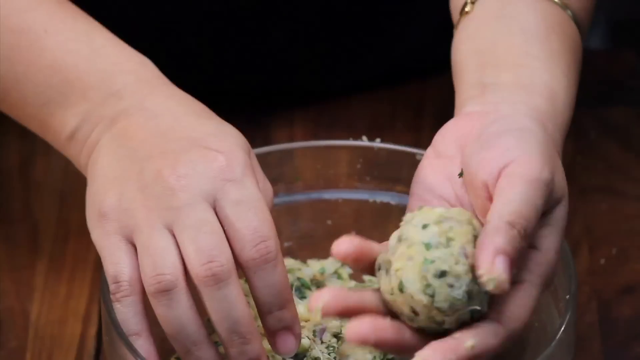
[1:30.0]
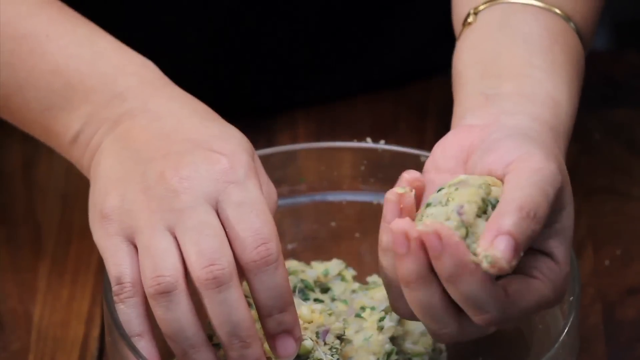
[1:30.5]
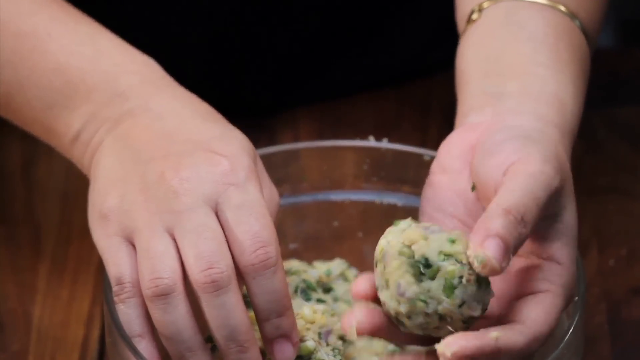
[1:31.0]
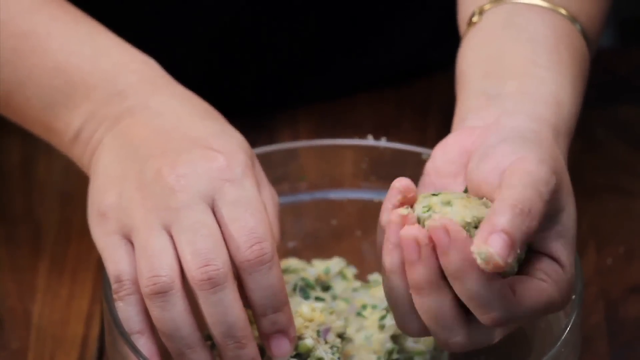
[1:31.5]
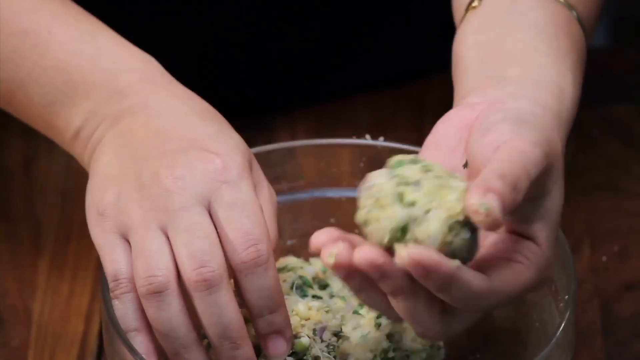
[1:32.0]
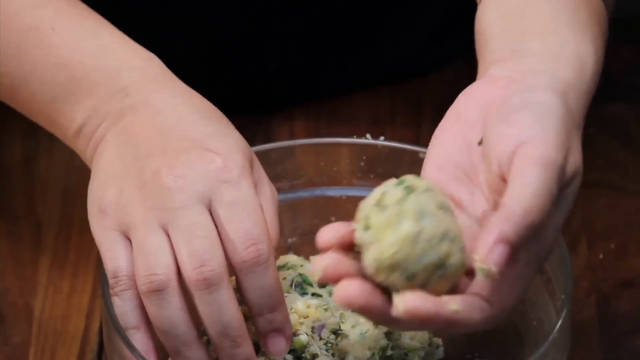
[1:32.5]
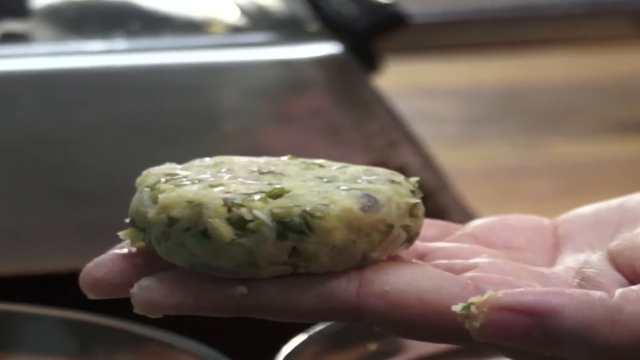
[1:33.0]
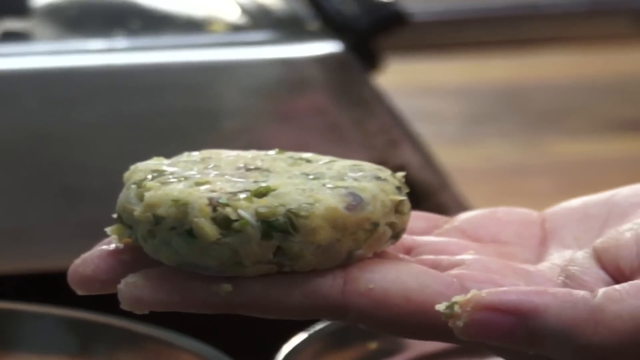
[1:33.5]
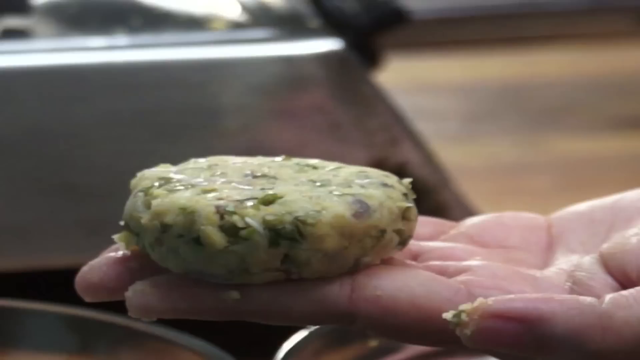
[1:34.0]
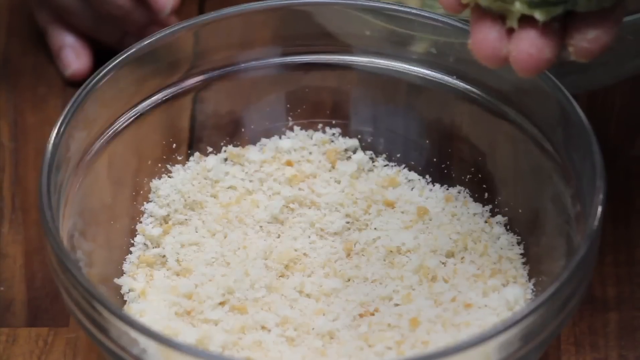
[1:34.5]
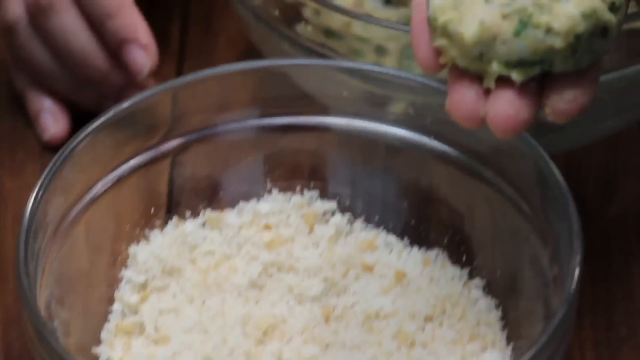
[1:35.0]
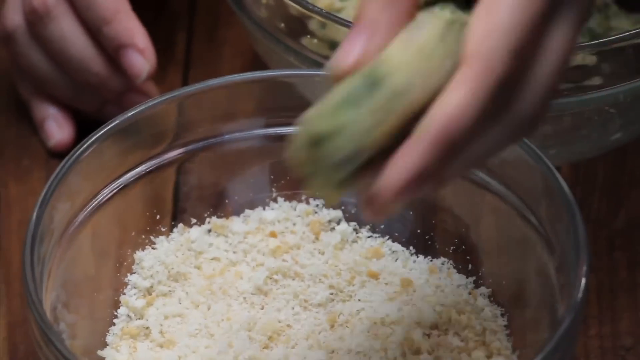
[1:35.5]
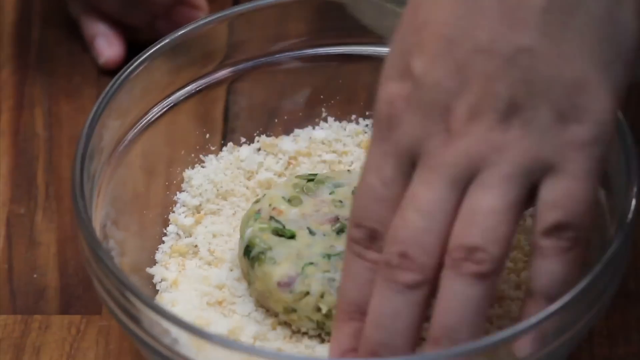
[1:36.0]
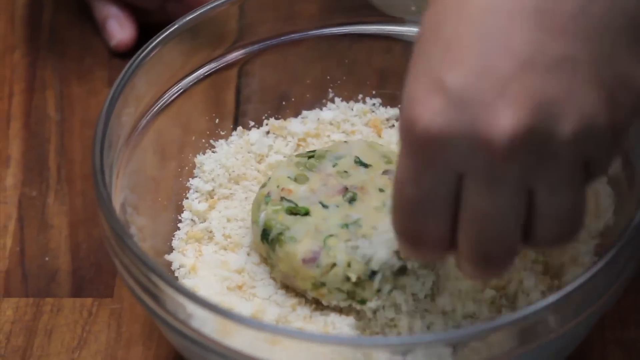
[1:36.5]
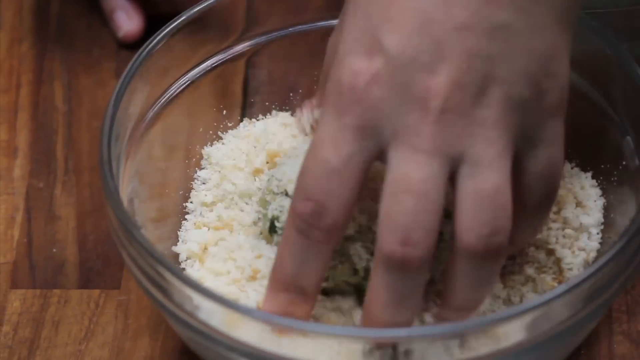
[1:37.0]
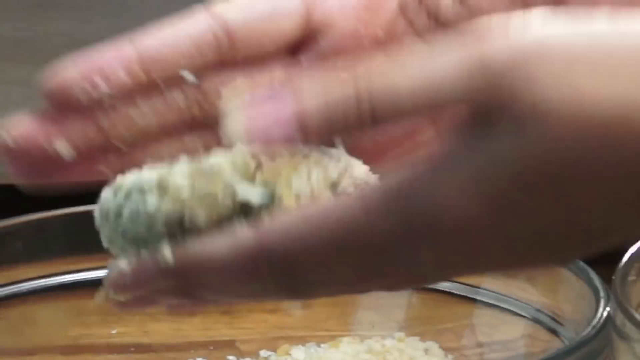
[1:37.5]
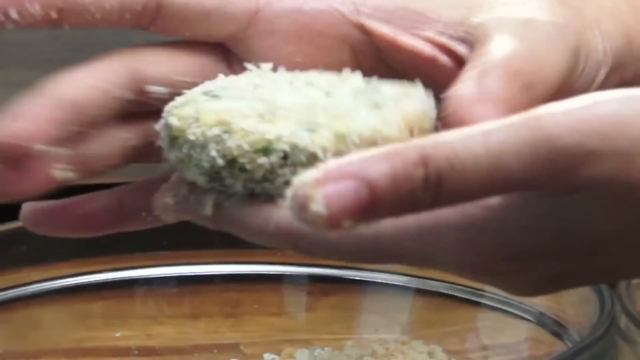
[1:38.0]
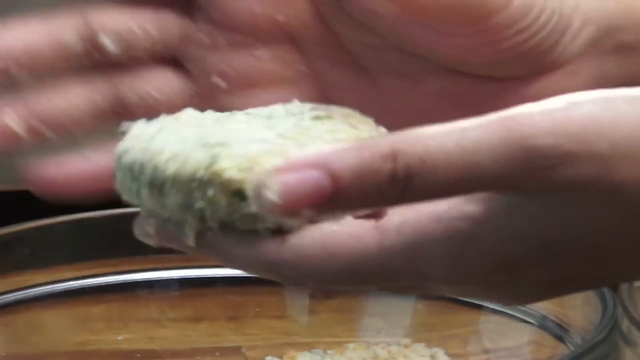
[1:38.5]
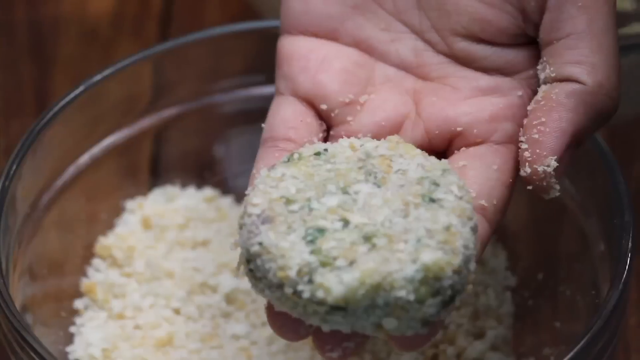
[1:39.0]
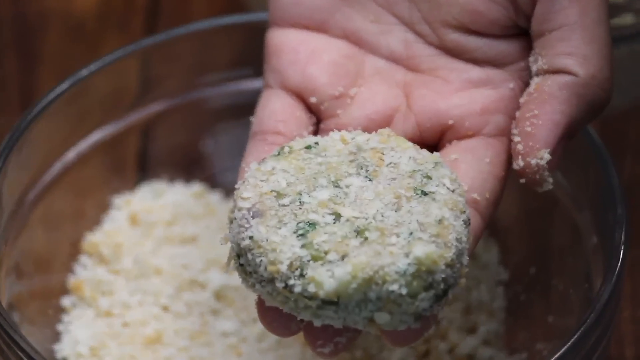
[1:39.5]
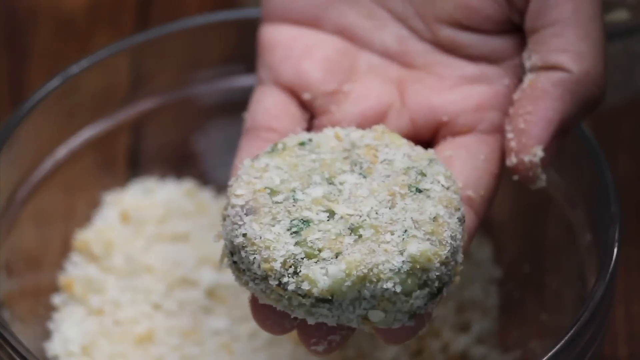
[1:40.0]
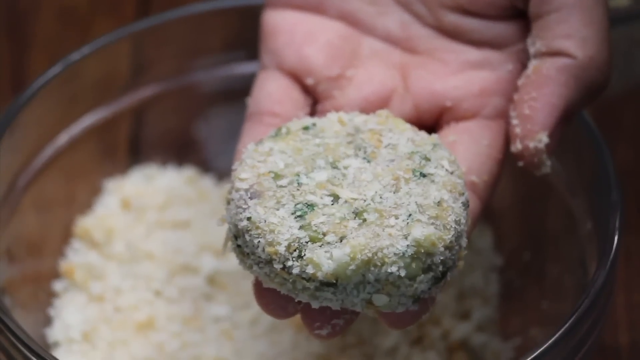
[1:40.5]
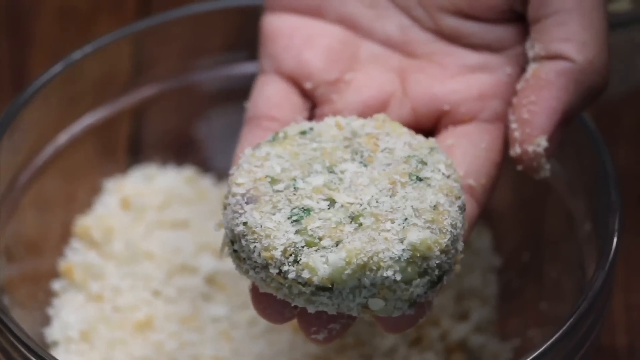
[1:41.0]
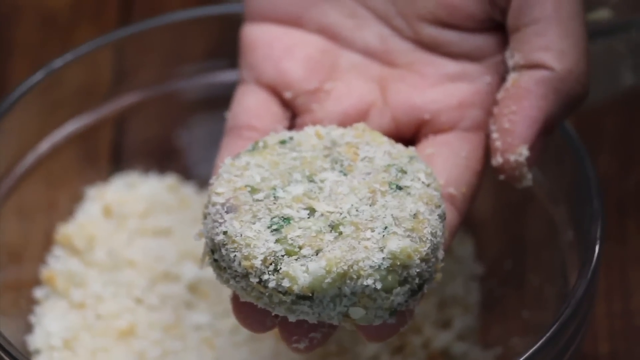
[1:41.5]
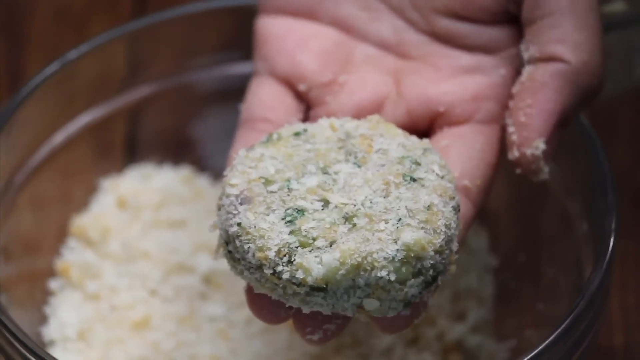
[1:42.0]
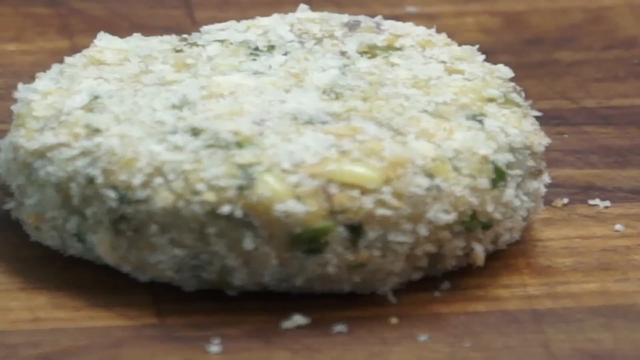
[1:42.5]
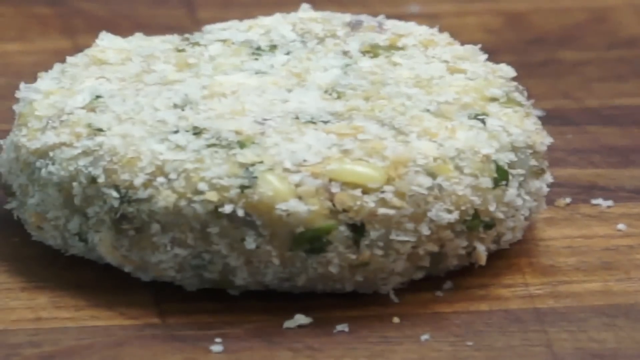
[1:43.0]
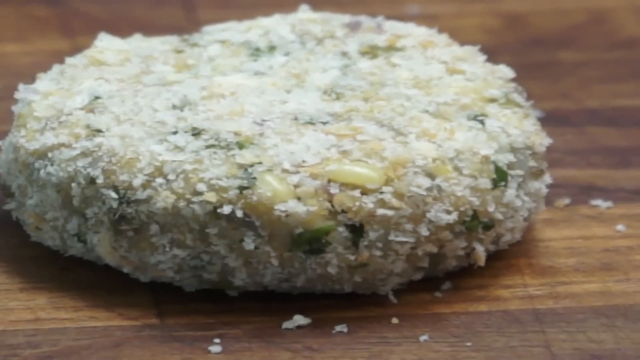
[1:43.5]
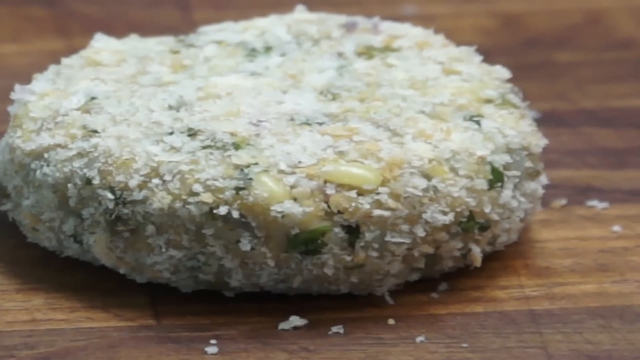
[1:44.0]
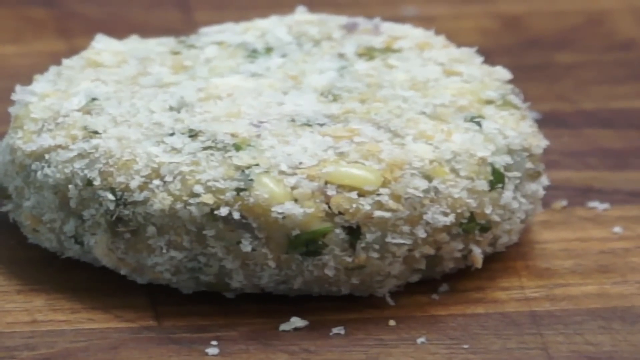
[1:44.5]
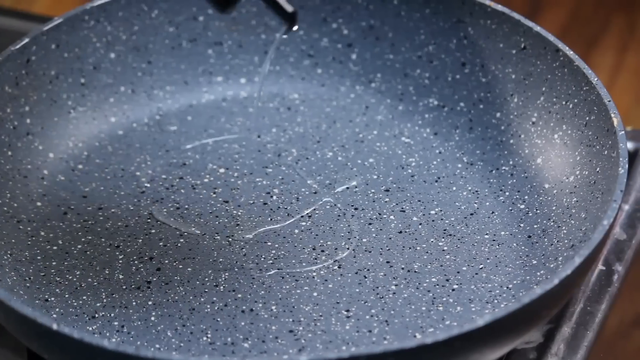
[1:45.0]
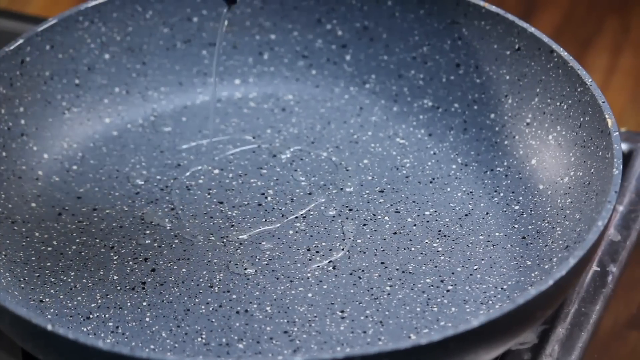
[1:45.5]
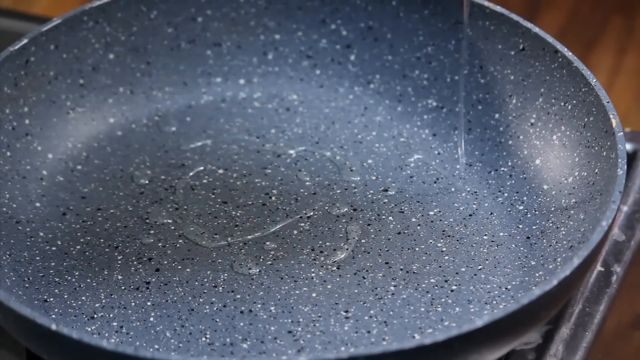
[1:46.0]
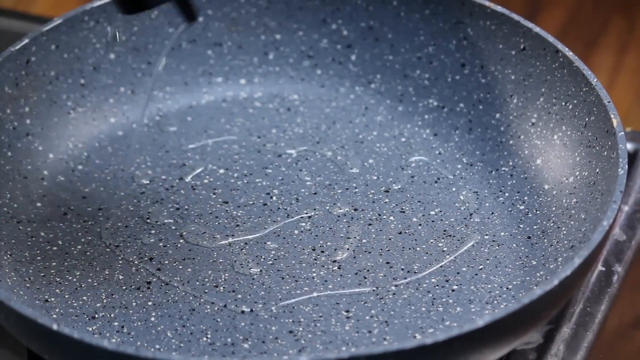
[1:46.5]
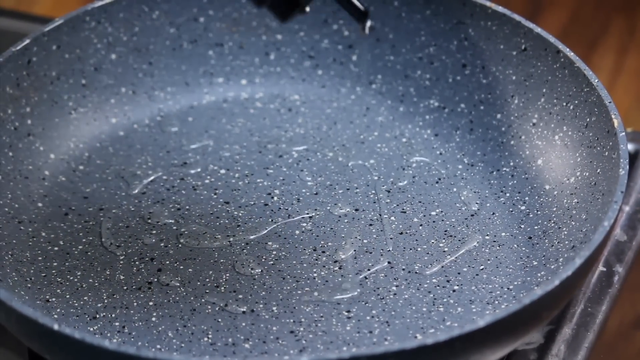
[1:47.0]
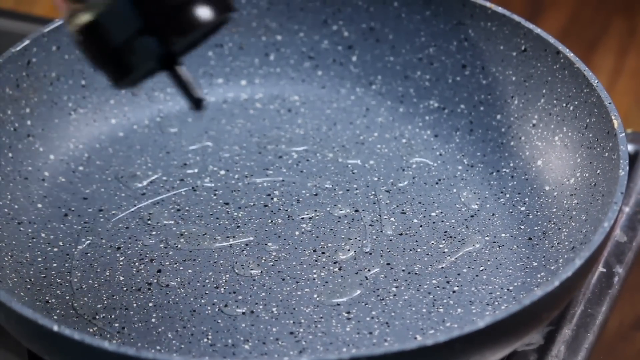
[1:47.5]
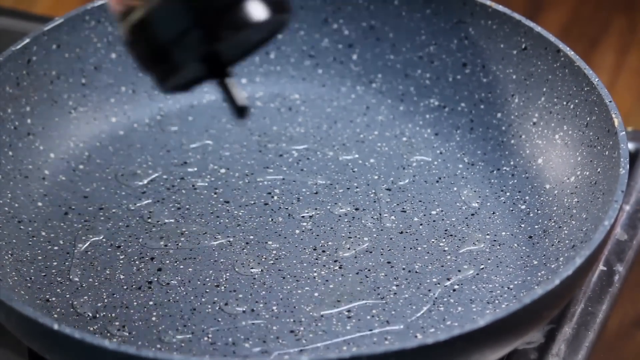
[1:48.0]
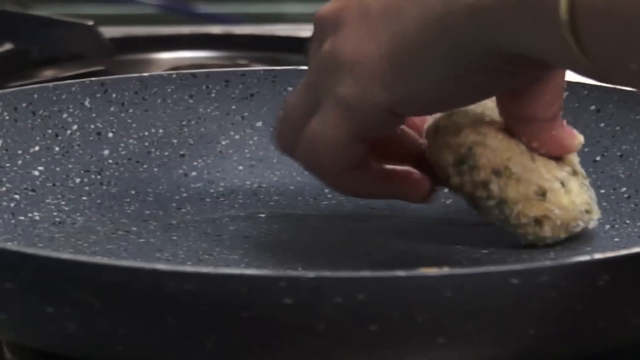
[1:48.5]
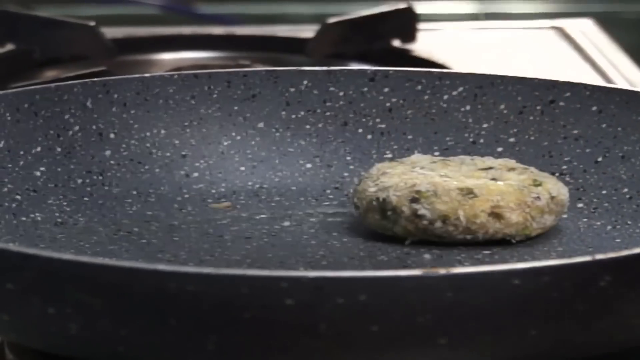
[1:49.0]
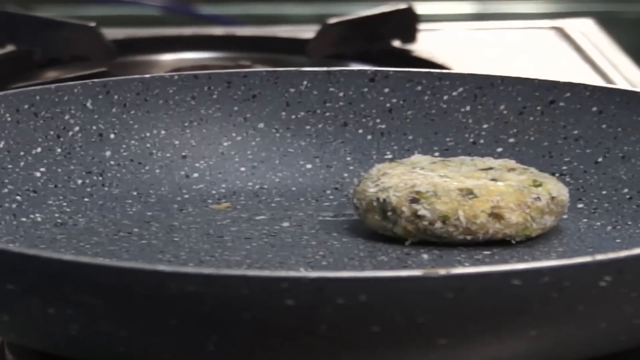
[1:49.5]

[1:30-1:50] Apparently a woman, wearing a gold bracelet on her left hand, holds a ball of the mixture in her left hand while her right hand is kind of resting on top of a bowl. She forms the mixture into circles and flattens them. There is a bowl with a mixture of what looks like cheese and breadcrumbs; she puts the ball in it and kind of drags it through, shaping it with her hands into a flattened circle and rounding the edges to make a round, nicely breaded patty. The patties look like meatballs with green in them. A couple of glass bowls are visible. She uses her oil sprayer to put more oil into the frying pan before putting down the patty.